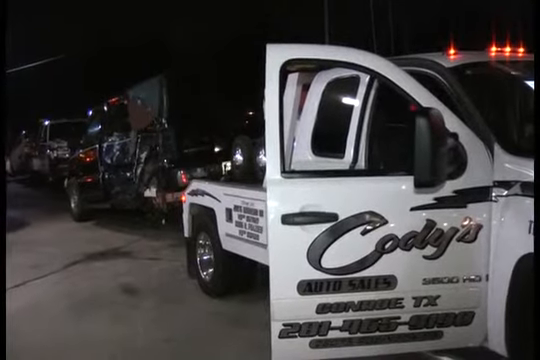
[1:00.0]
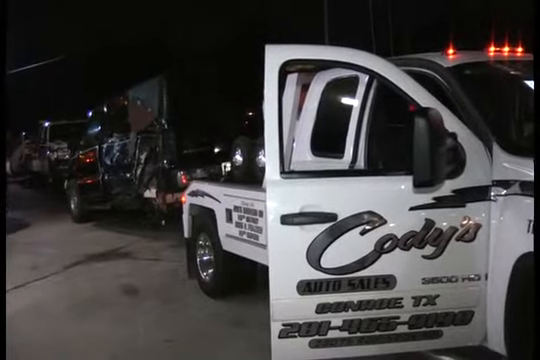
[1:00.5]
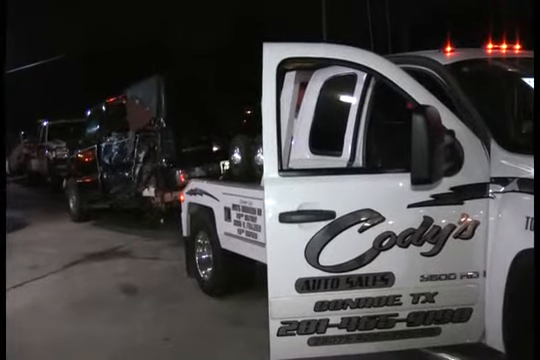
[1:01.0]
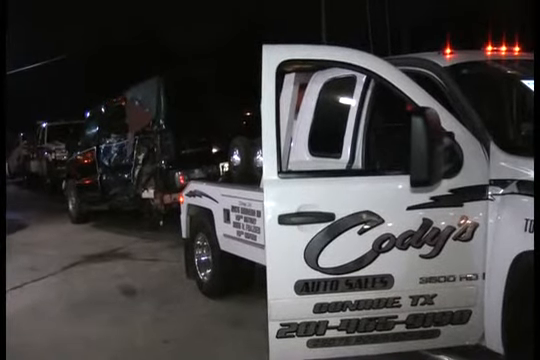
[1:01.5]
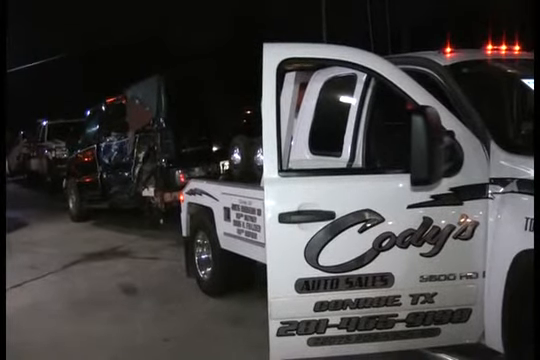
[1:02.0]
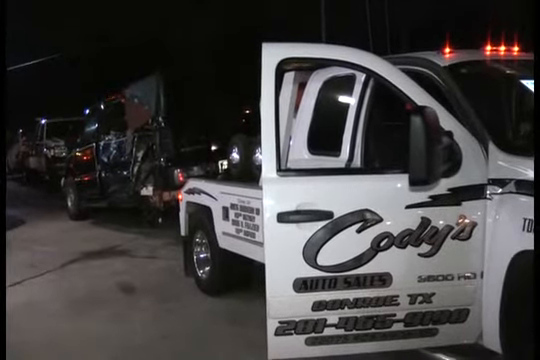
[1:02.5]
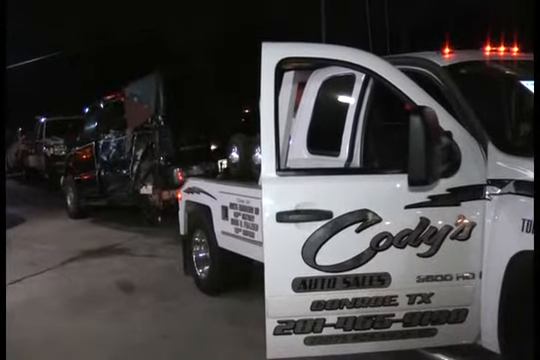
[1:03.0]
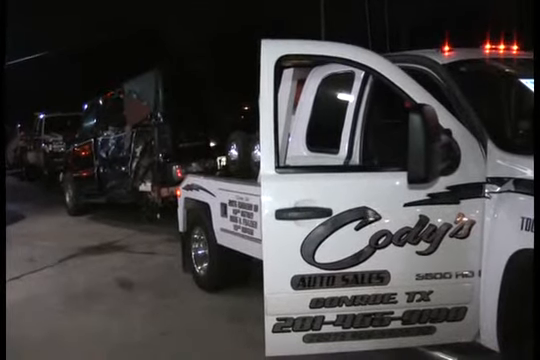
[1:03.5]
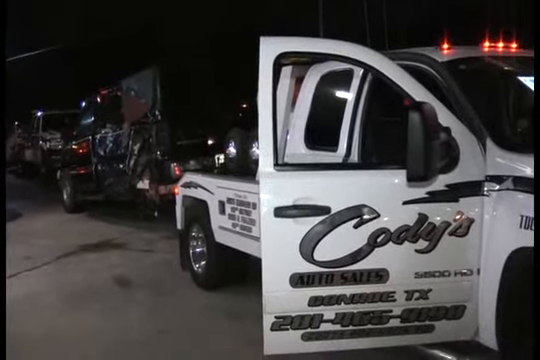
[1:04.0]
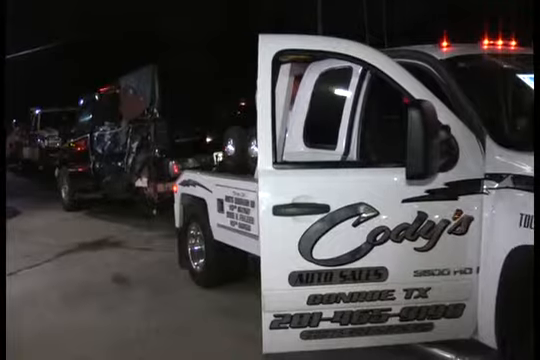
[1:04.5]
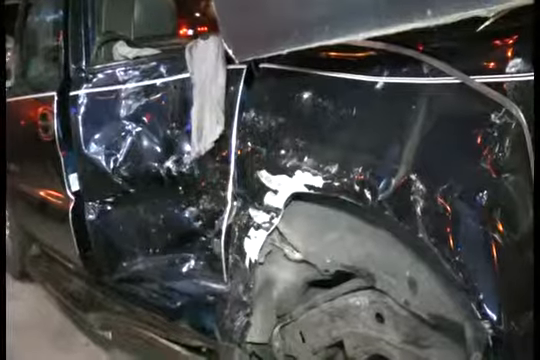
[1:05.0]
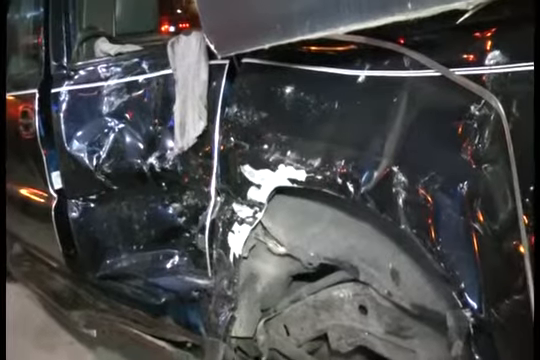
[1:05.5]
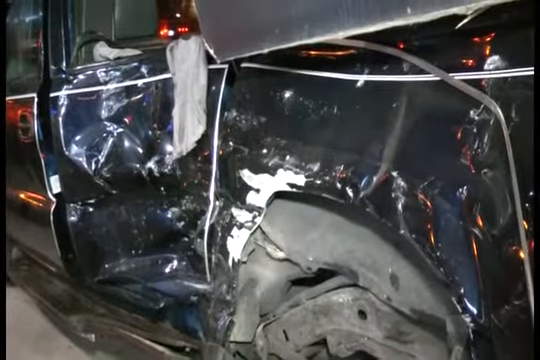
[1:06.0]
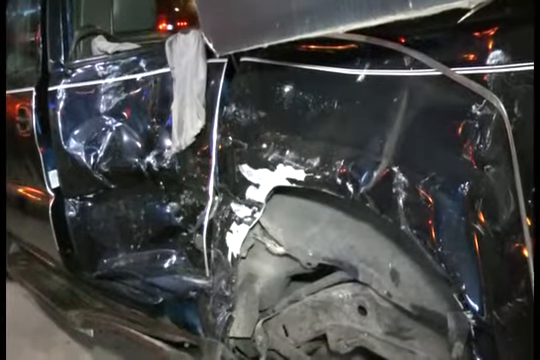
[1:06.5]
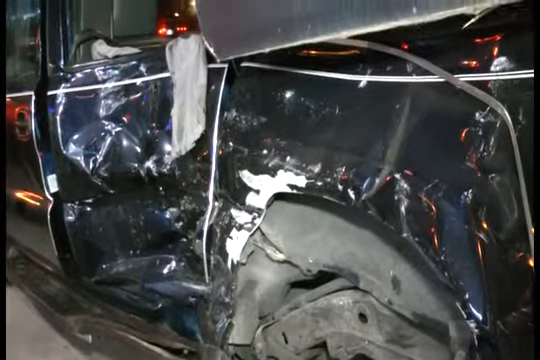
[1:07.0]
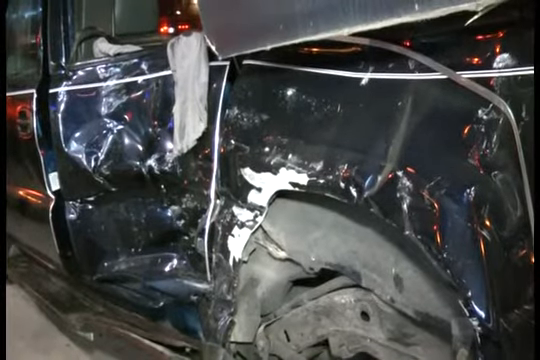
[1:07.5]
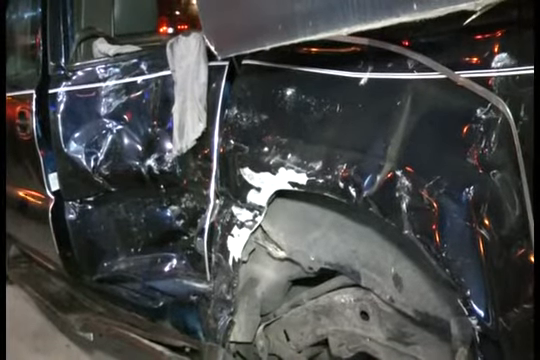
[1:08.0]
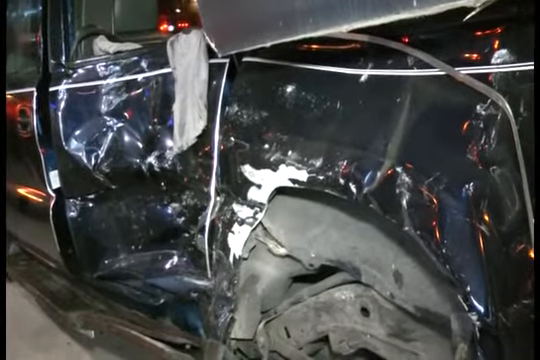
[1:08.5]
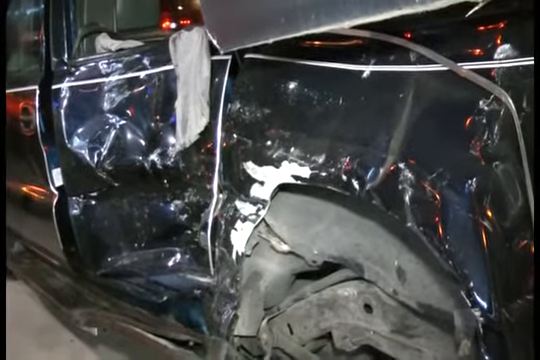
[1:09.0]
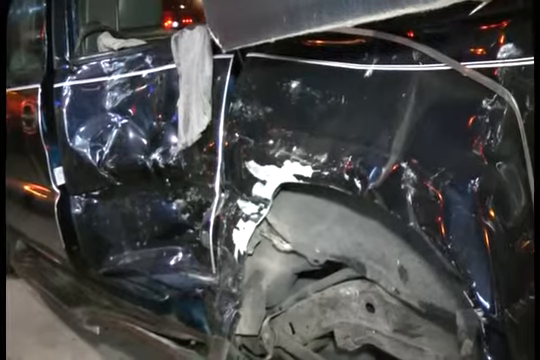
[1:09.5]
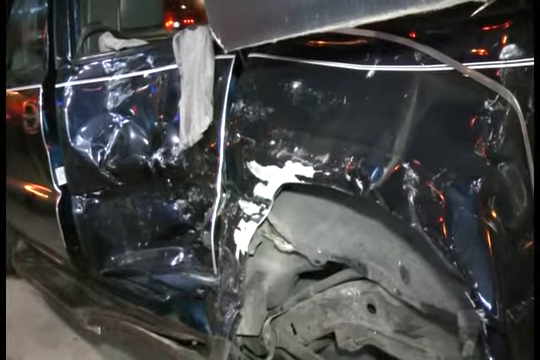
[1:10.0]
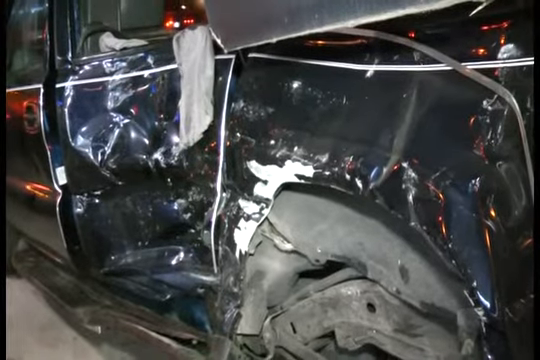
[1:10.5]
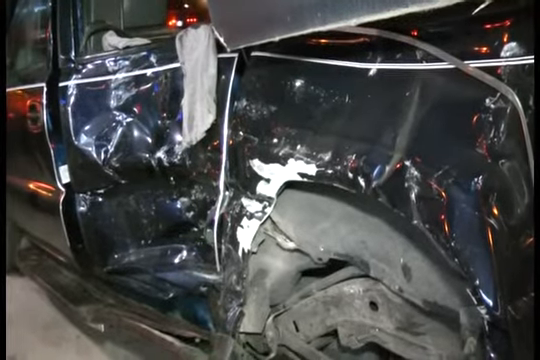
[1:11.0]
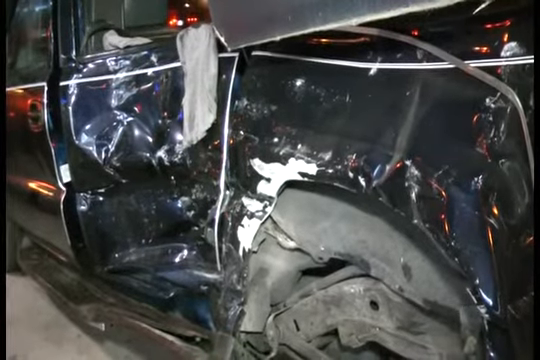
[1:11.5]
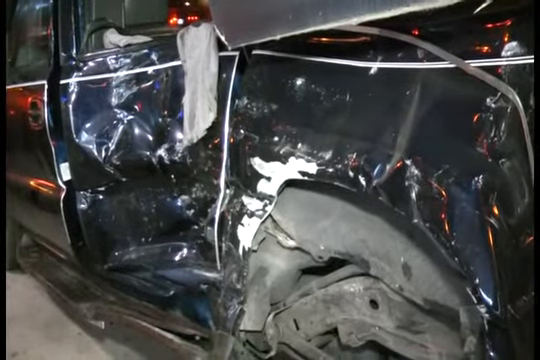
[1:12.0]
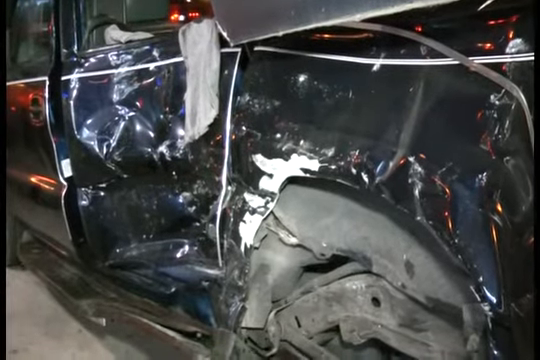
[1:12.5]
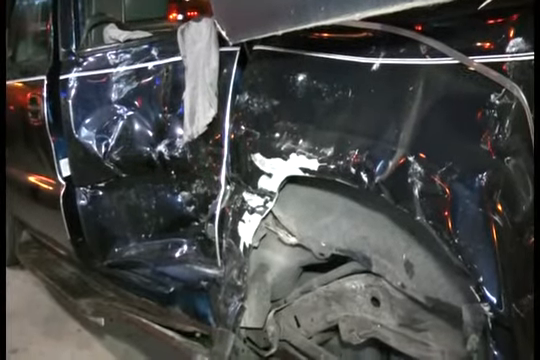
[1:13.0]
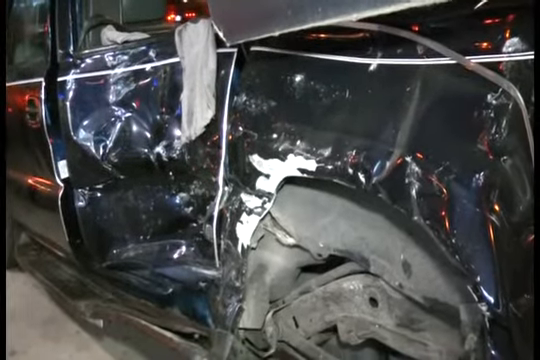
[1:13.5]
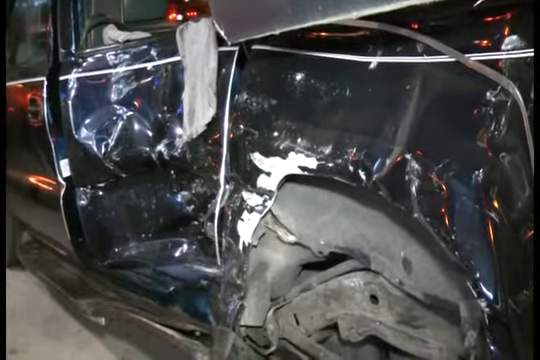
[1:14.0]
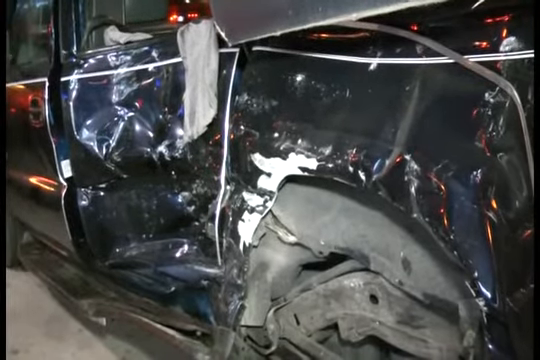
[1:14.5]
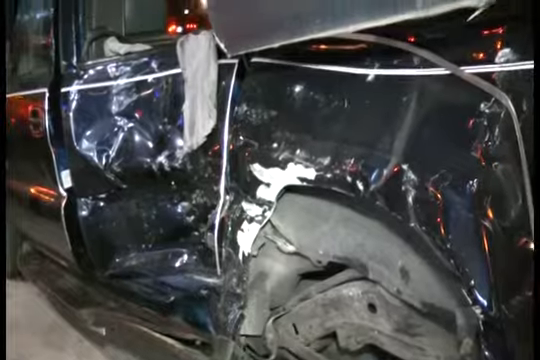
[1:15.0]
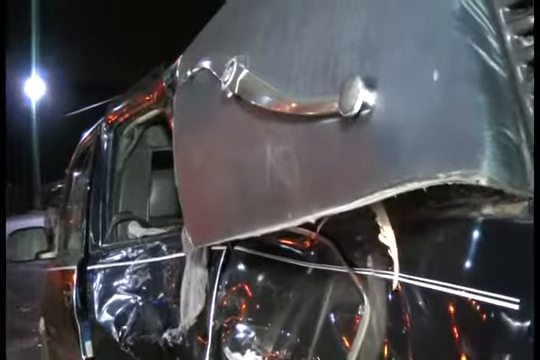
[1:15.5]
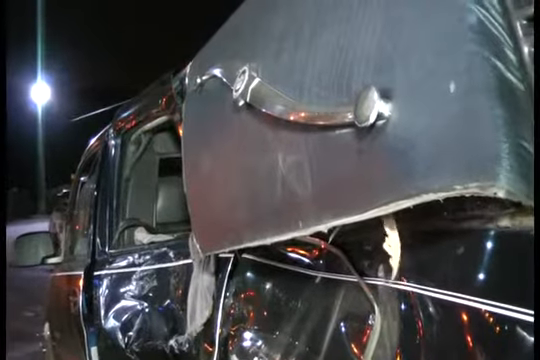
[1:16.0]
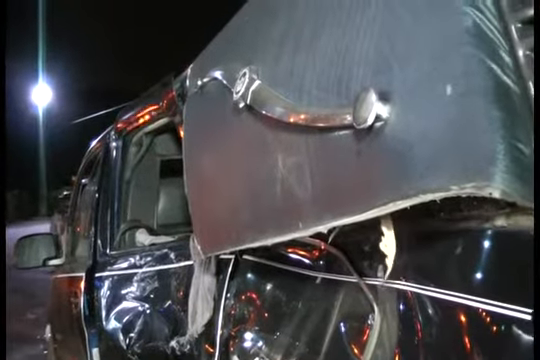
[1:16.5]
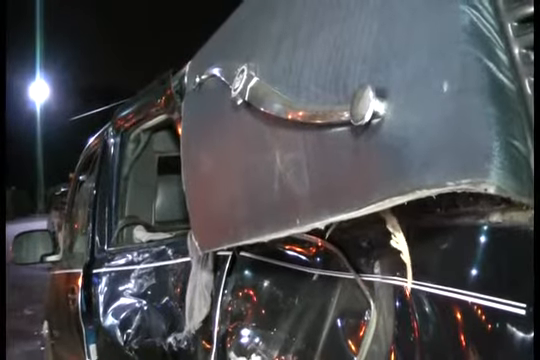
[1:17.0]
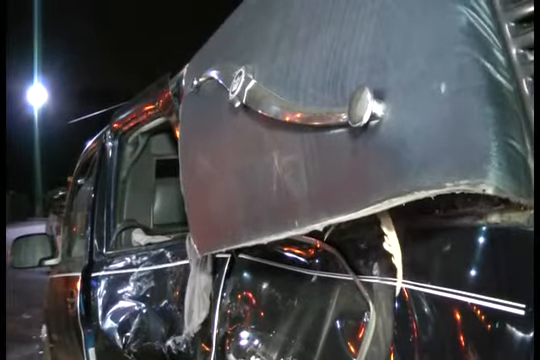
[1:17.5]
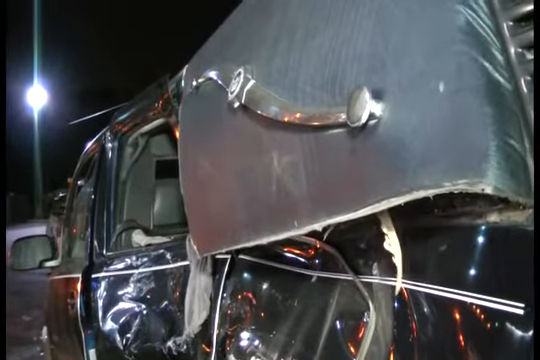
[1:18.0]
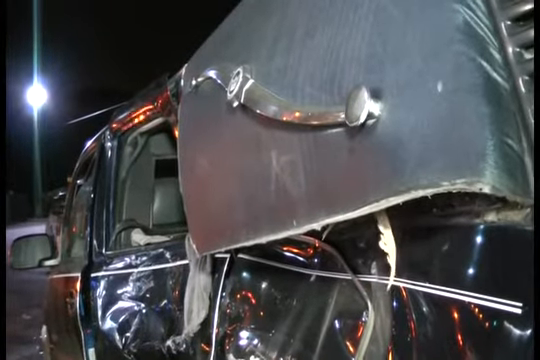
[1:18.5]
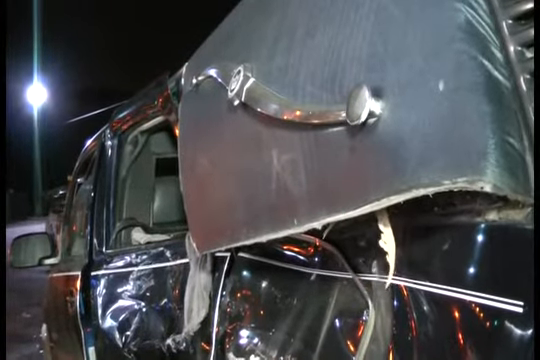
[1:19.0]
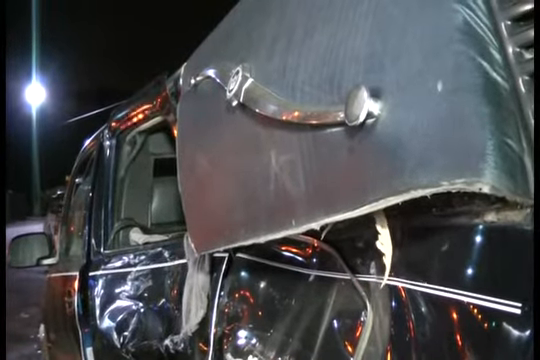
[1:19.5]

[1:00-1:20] A white truck is shown with its right-side door open. The words "Cody's Auto Sales" are written on the front door, along with the numbers "201-466-9198." At the back of the truck on the right side there is some writing, but it is blurry. Behind the truck is a black vehicle that has been in an accident and is dented, and in front of the black vehicle is a white truck. All three vehicles are parked in a lot. The video cuts to a close-up of the dent on the black vehicle, with a missing wheel around the dented area and a white piece of fabric dangling from the back left window. The video then cuts to another angle of the same dented vehicle, where another piece of white fabric dangles from it, the wind blowing softly through it.